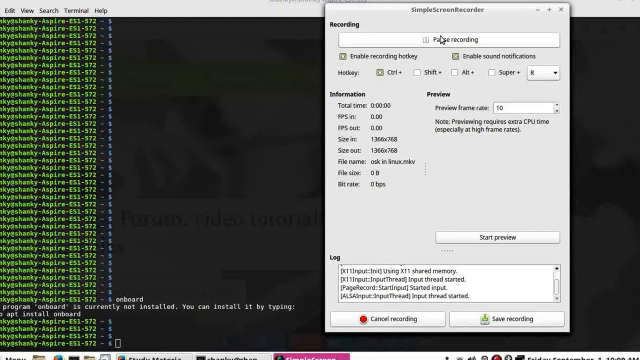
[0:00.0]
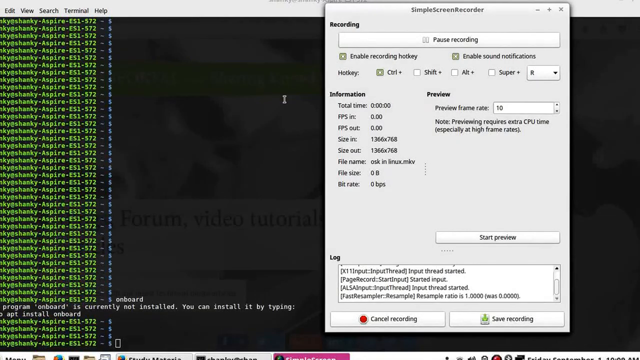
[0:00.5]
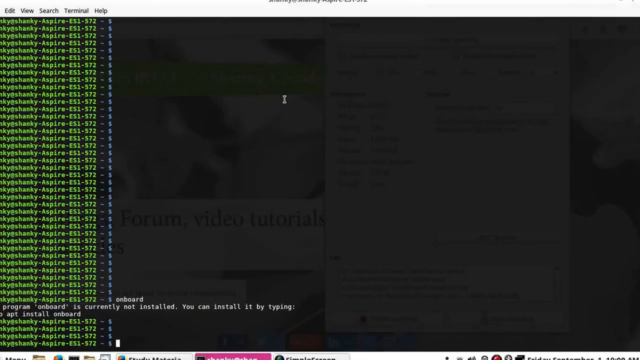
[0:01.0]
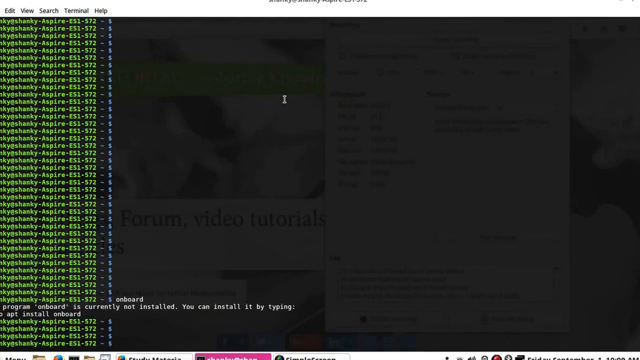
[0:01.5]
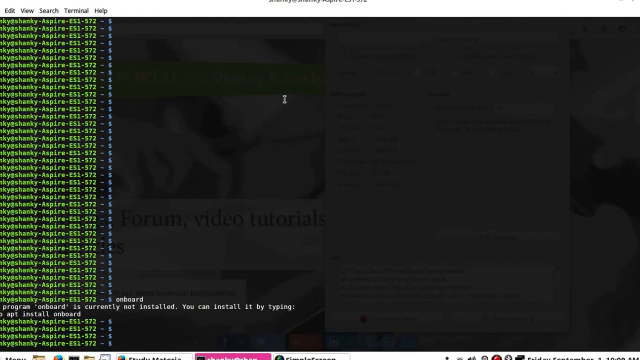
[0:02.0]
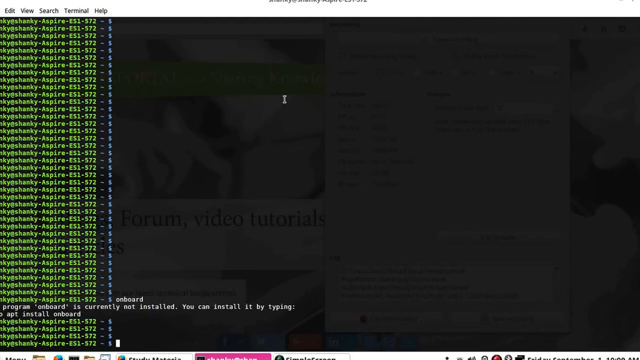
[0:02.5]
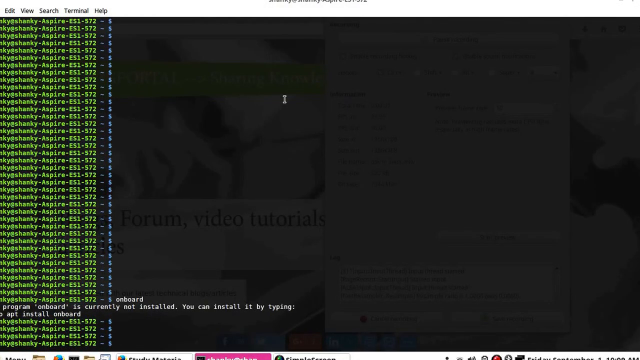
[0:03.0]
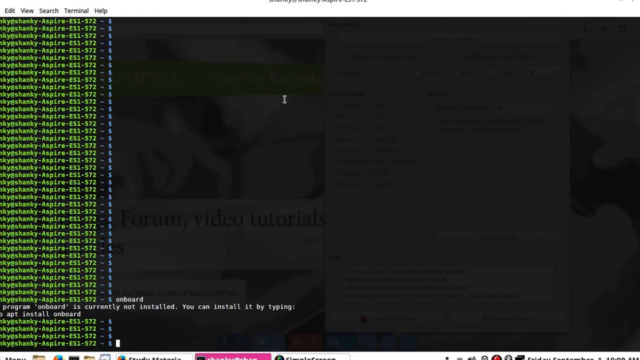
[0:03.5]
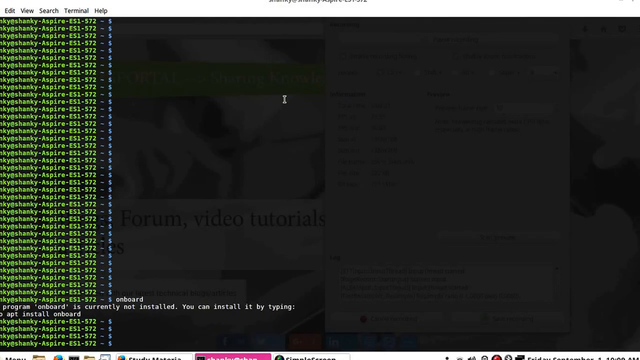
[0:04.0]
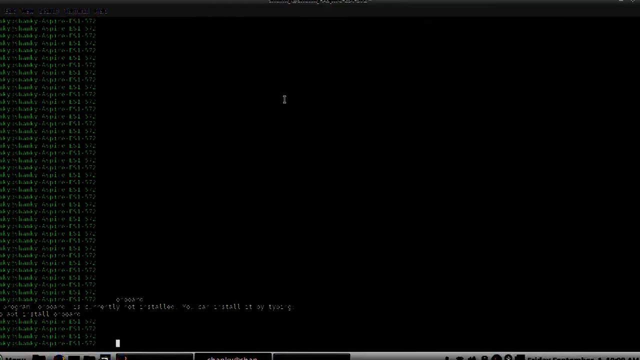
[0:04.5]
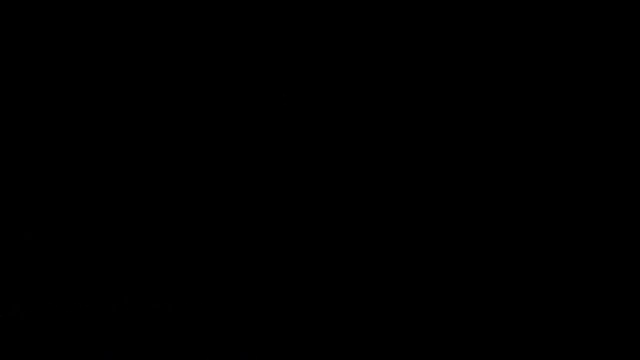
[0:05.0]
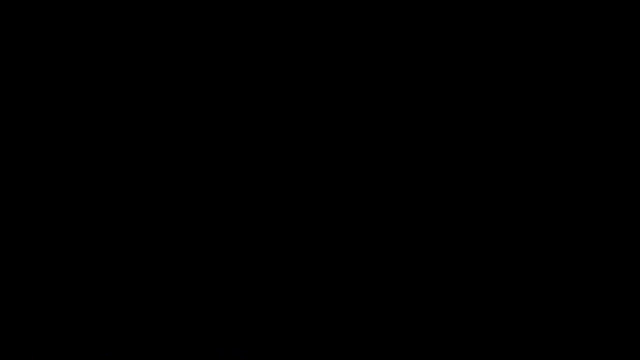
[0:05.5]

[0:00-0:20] Bright green text runs down the entire left side of the screen. Then a program pop-up appears on a black background. The top of the pop-up reads "Simple Screen Recorder," and below that it reads "Recording." There is a button that says "Pause Recording." Below that it reads "enable recording" and also "enable sound notifications." Some buttons are illegible. The window lists "information," "total time," "FPS in" with a timestamp, "FPS in" with a timestamp, "out" with a timestamp, "size in" with a dimension, "size out" with a dimension, "file name," "file size," and "bit rate." There is also a frame for a preview and a "preview frame rate" setting, with a note below it that reads "note. Previewing requires extra CPU time, especially at high frame rates." Below that is a button that says "start preview," and below that is a detailed log of information.